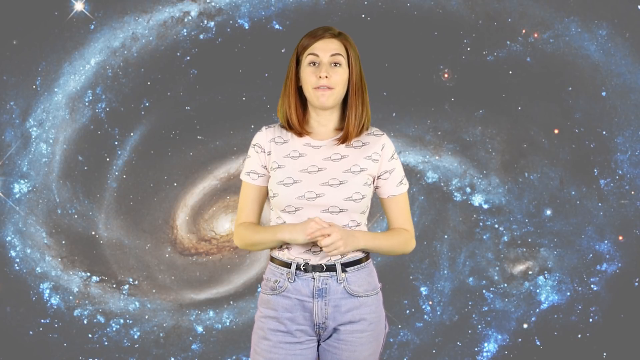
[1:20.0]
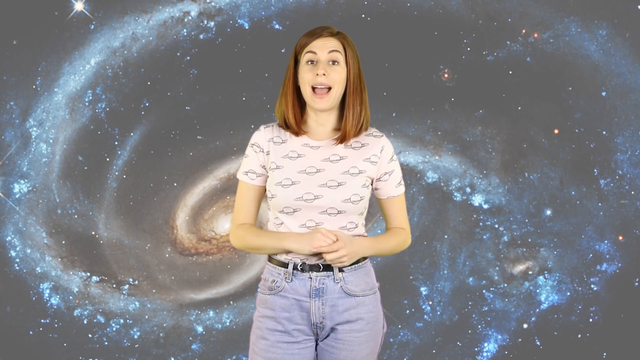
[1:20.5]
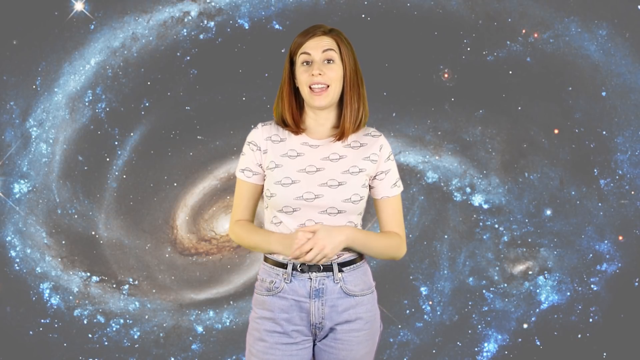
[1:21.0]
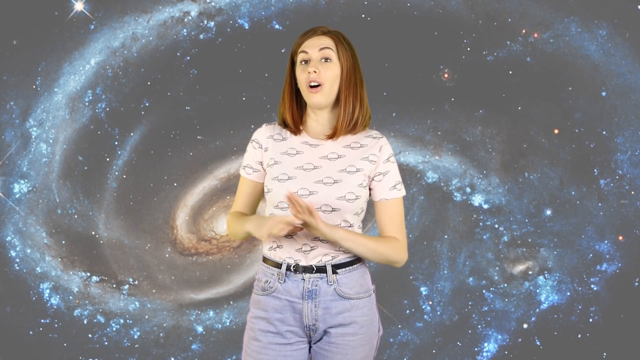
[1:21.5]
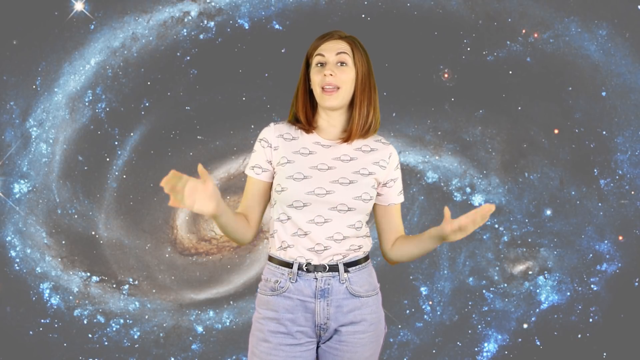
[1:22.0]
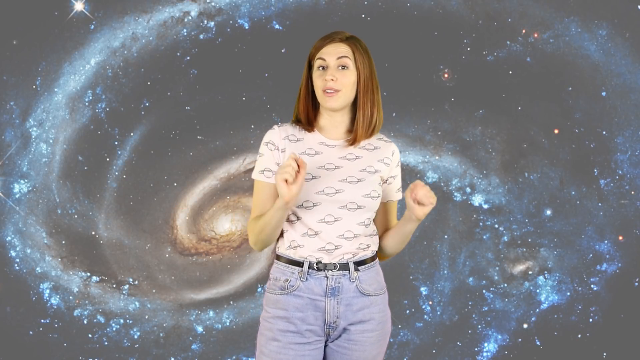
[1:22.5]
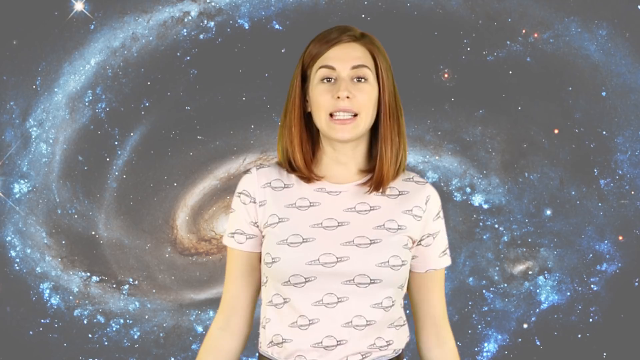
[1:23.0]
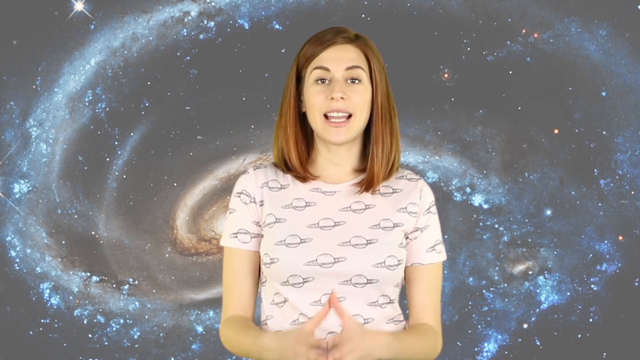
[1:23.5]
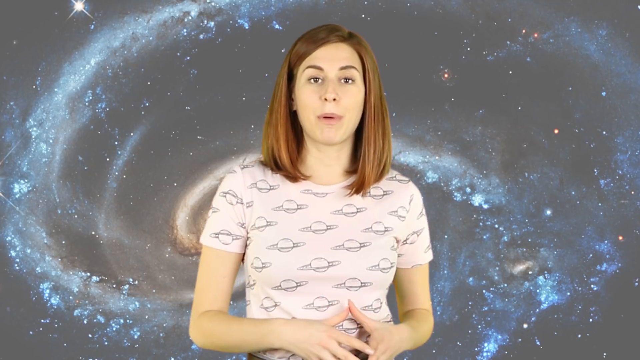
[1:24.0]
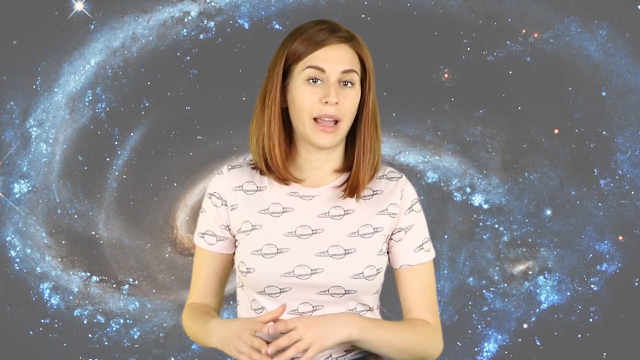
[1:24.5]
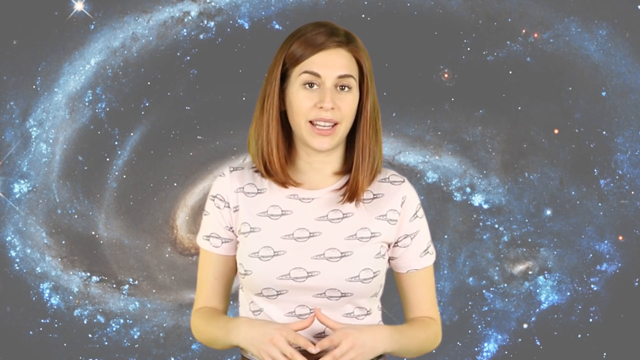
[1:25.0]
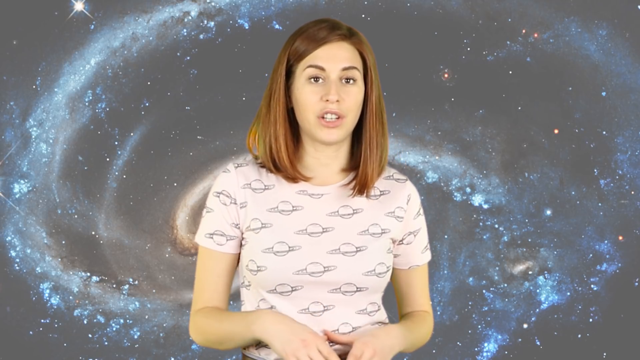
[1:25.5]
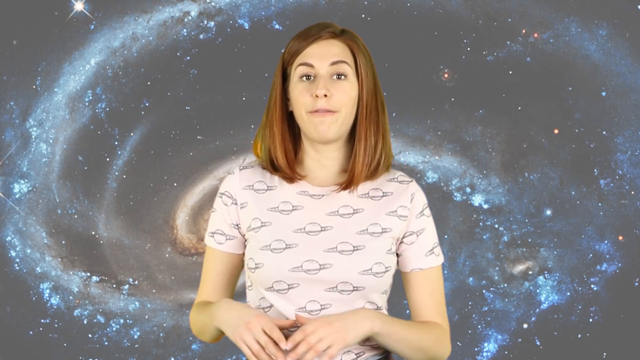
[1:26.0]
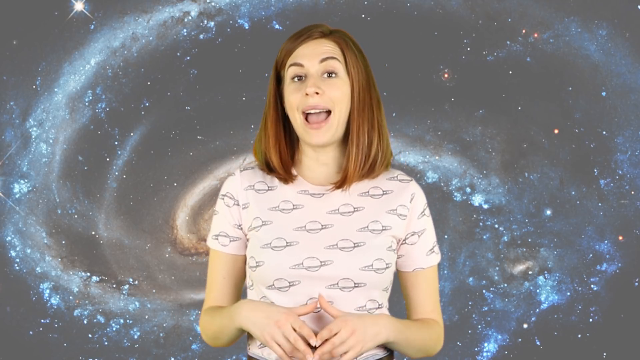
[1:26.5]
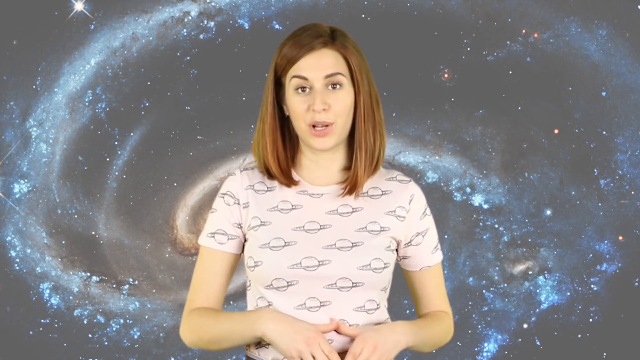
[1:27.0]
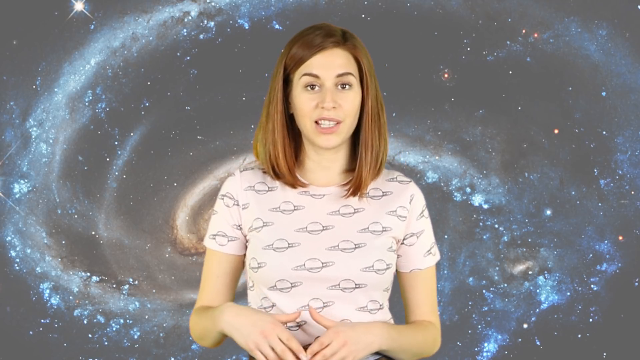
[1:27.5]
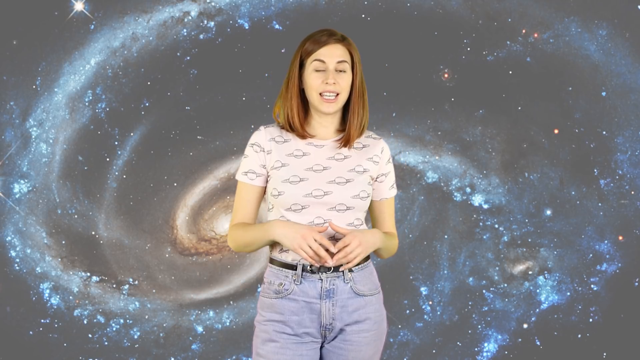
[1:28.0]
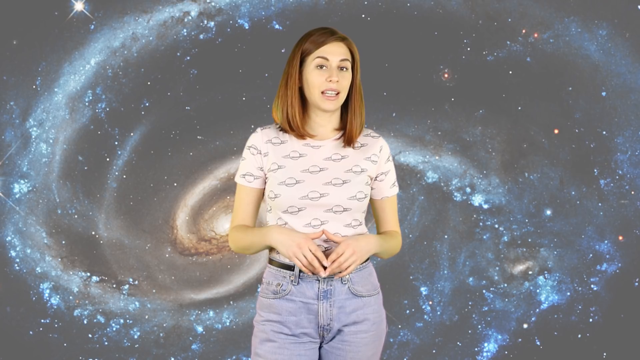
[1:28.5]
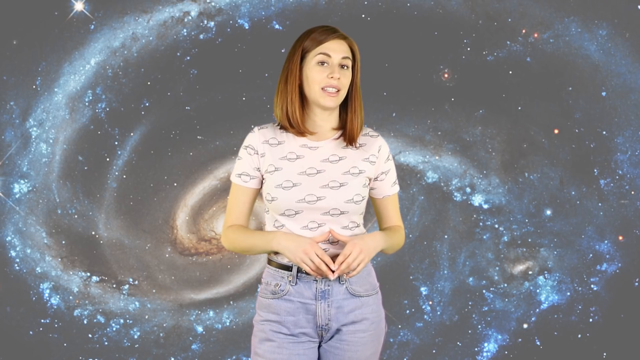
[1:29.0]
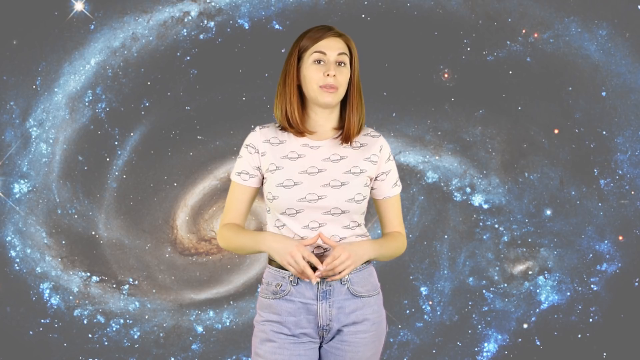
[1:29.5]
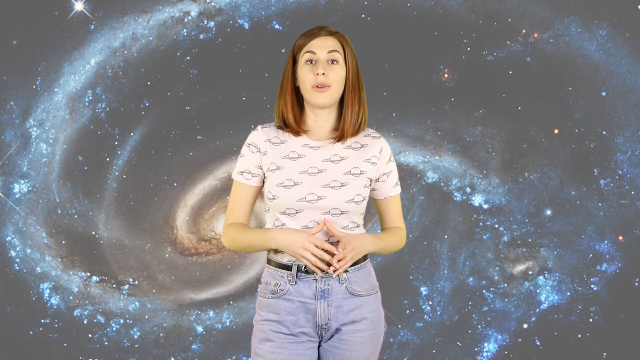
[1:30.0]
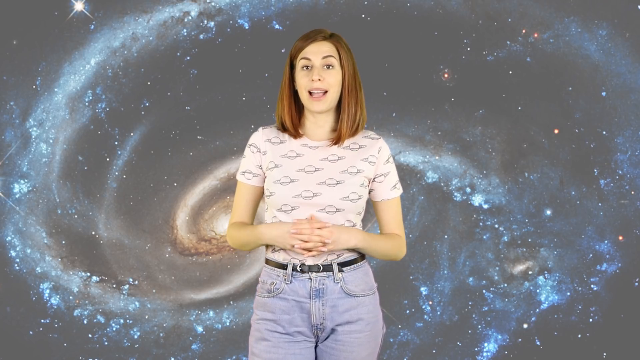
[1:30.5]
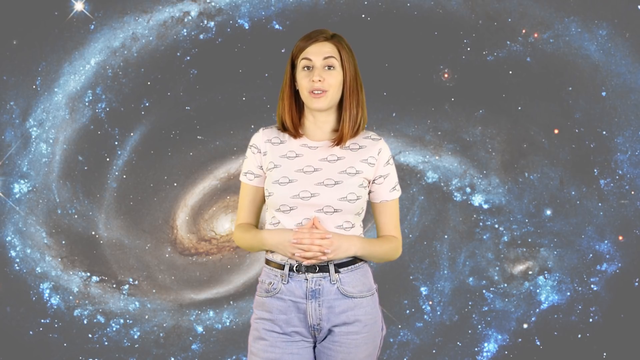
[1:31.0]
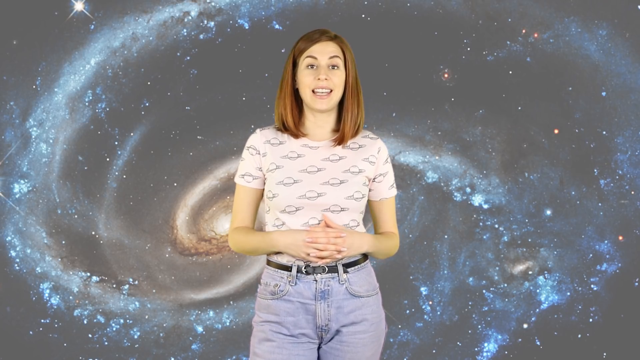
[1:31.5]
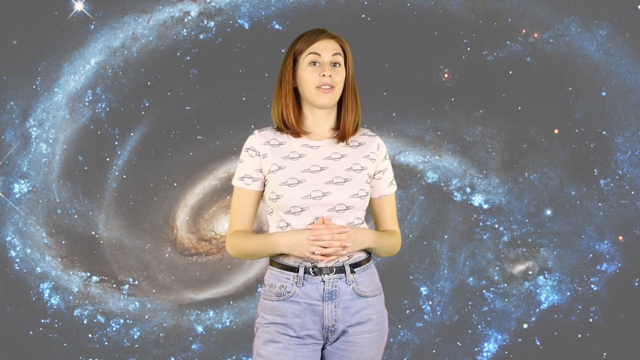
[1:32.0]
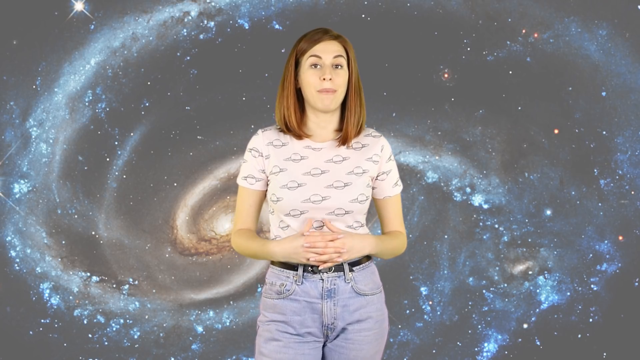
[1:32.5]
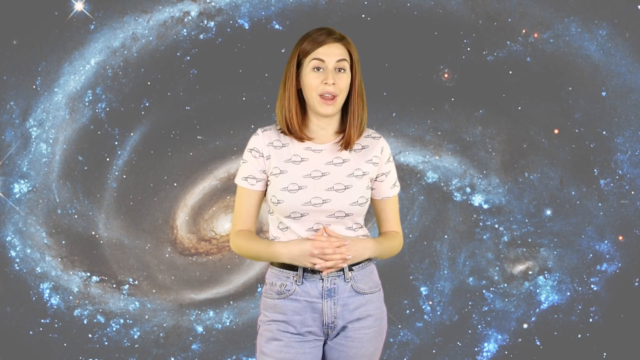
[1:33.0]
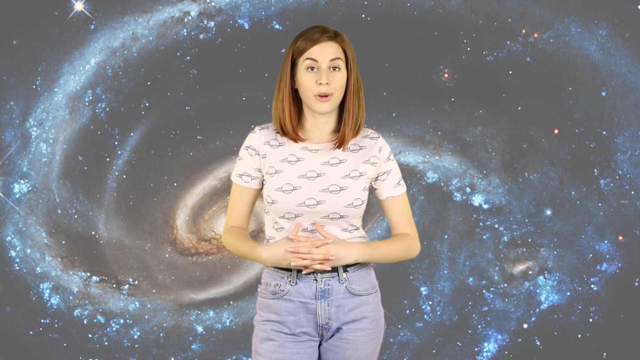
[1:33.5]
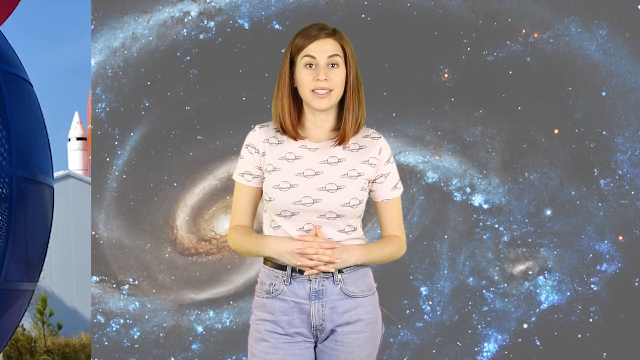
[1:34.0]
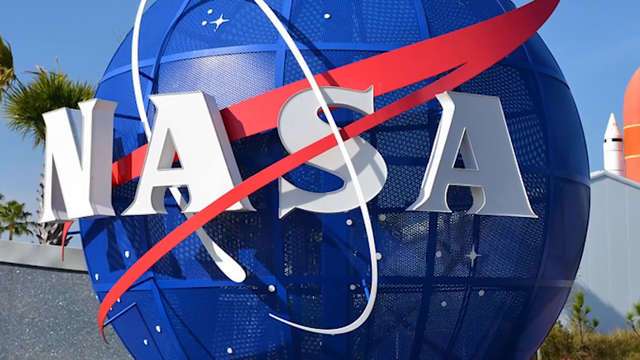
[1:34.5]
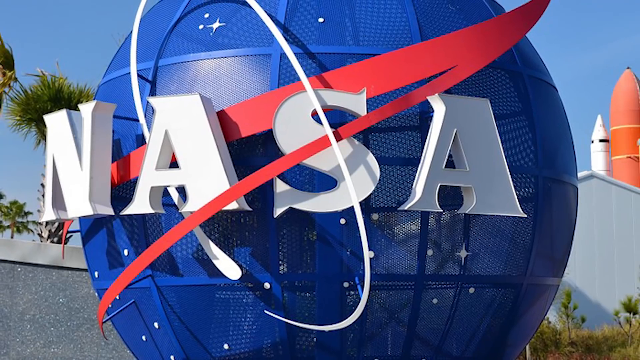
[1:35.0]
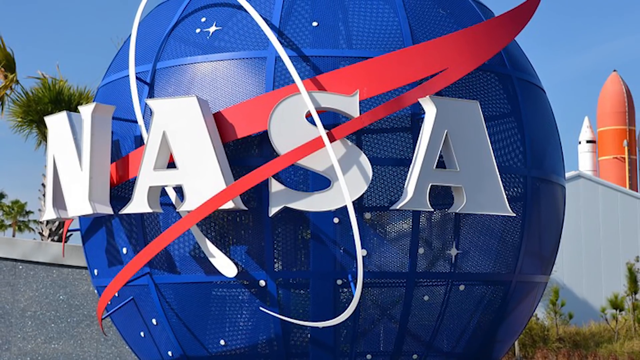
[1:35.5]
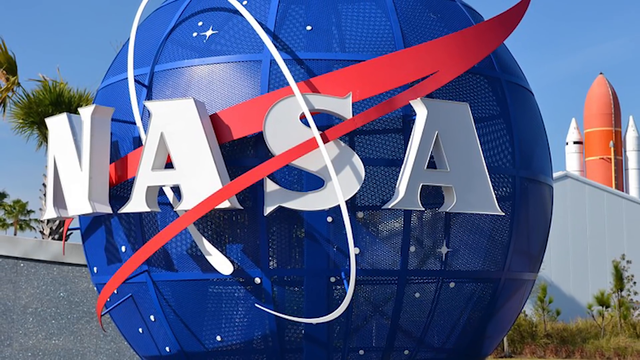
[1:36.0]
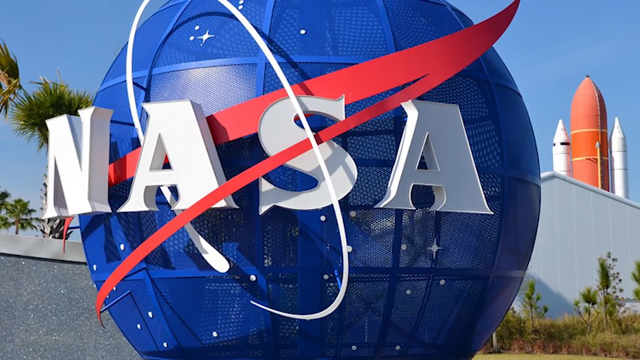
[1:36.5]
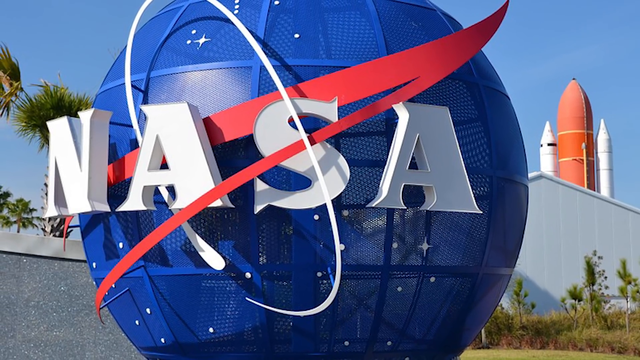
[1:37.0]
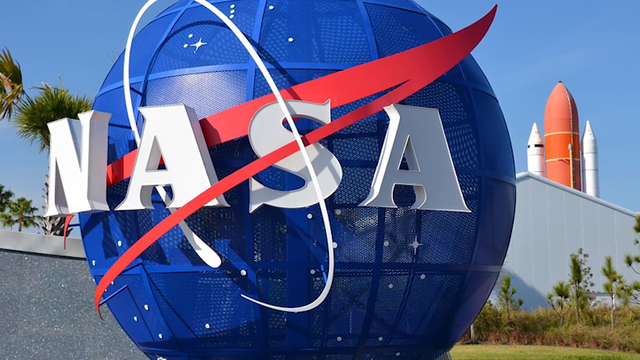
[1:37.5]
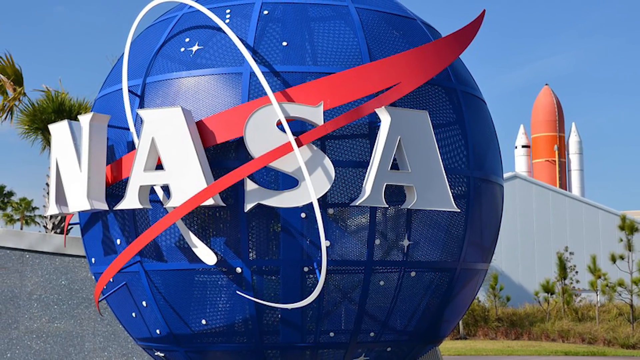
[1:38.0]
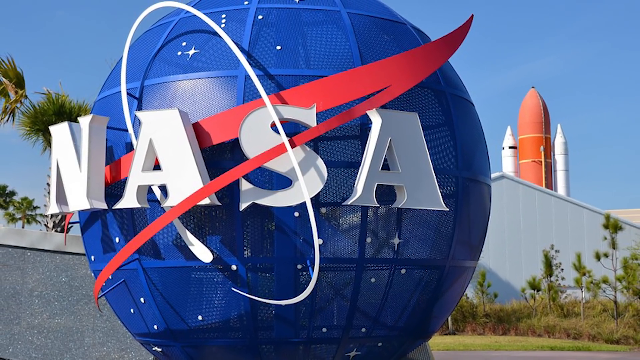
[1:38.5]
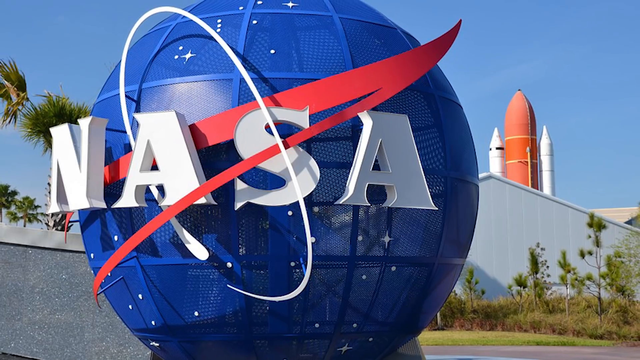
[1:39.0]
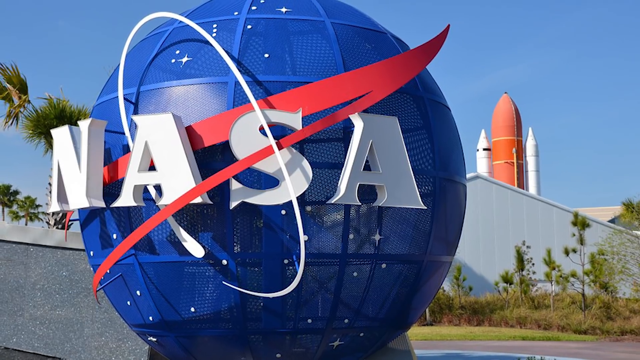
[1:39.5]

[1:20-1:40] The woman faces the viewer with her hands together, wearing a white t-shirt with many pictures of the planet Saturn. She spreads her hands to her sides, and the view zooms in on her as she talks, very close, in the center and facing the viewer. The view zooms out; she has her hands together, fingers together, and continues to talk. The scene changes to a big NASA logo with white letters, presented on a big blue sphere, with the logo in the middle. On the right side in the distance is a spaceship rocket, and on the left side are trees, which look like palm trees. The scene then changes to a telescope looking up at the dark sky.